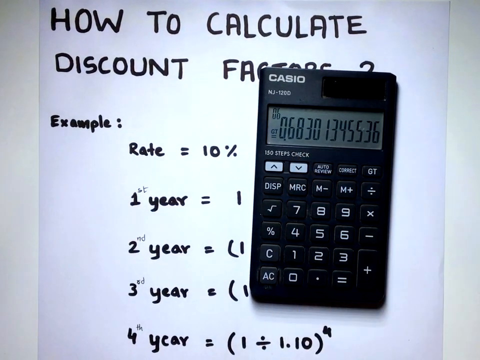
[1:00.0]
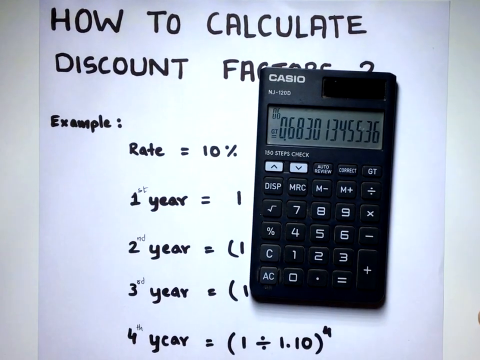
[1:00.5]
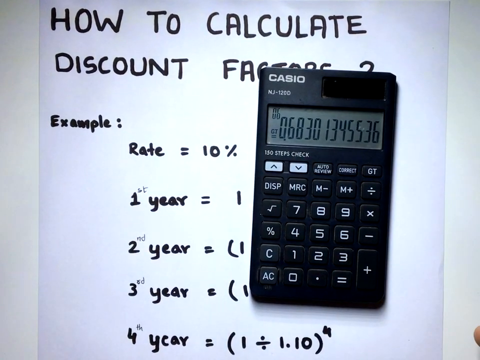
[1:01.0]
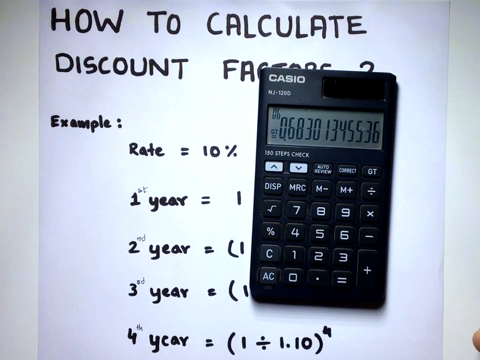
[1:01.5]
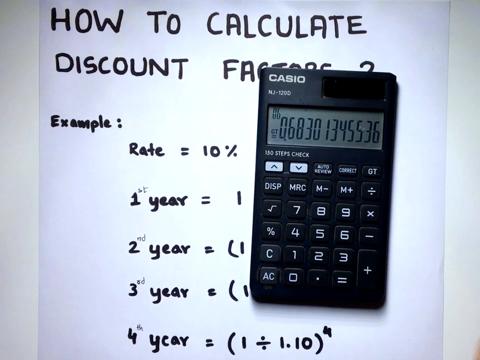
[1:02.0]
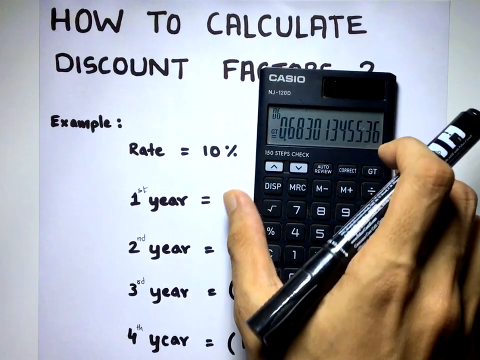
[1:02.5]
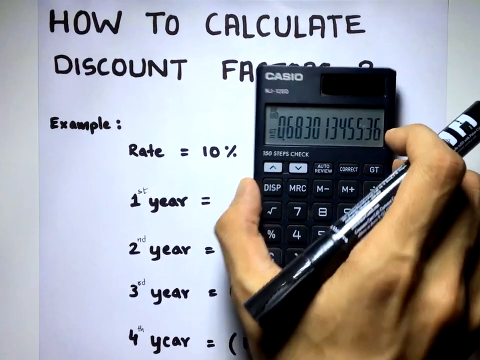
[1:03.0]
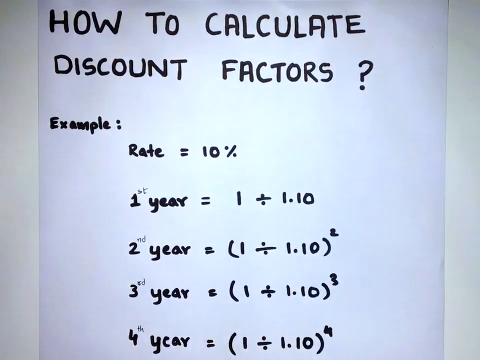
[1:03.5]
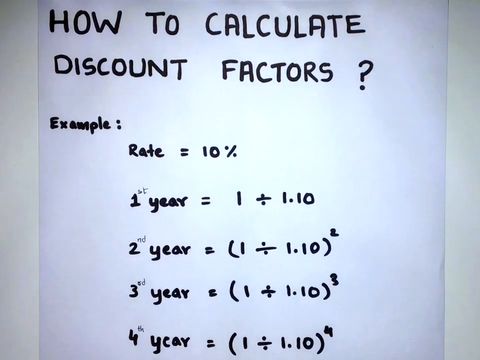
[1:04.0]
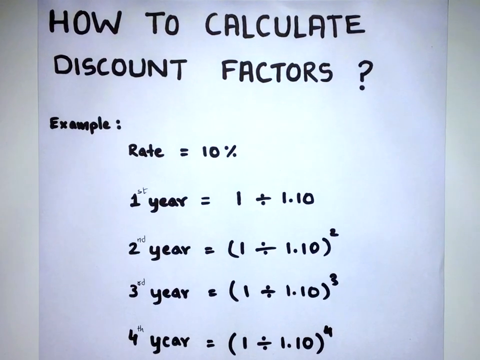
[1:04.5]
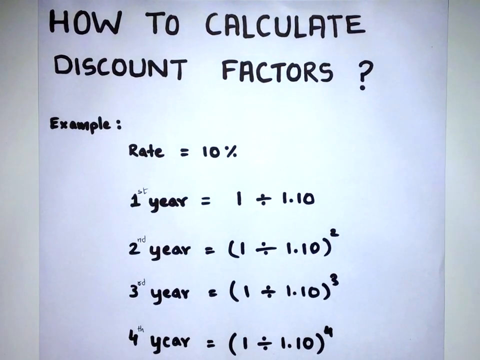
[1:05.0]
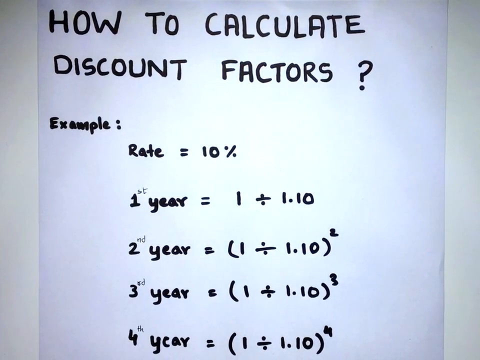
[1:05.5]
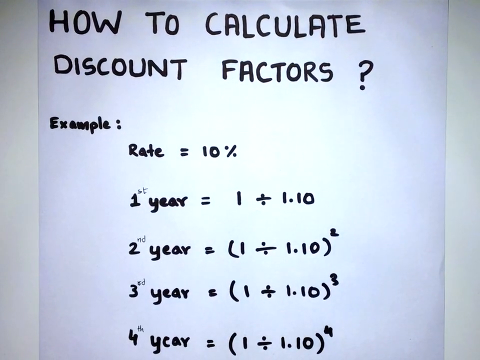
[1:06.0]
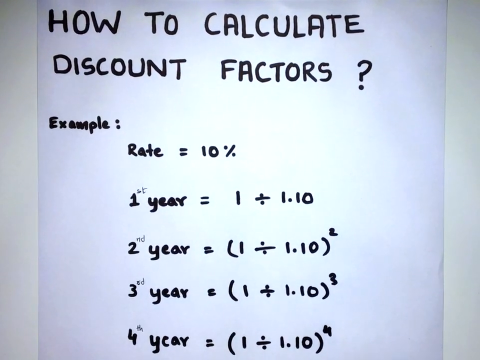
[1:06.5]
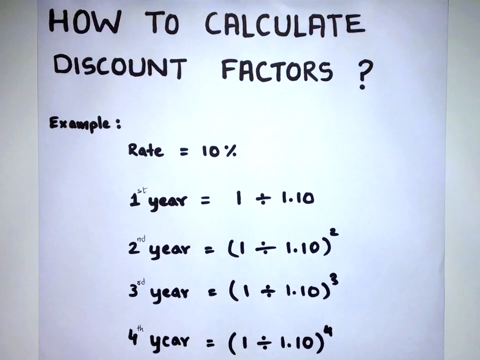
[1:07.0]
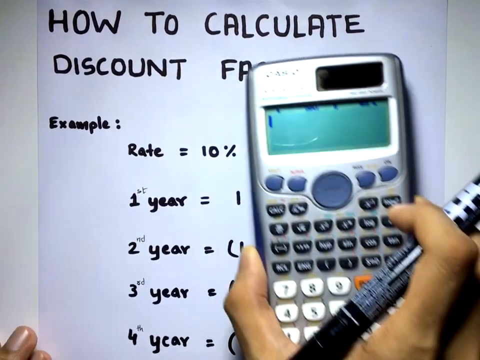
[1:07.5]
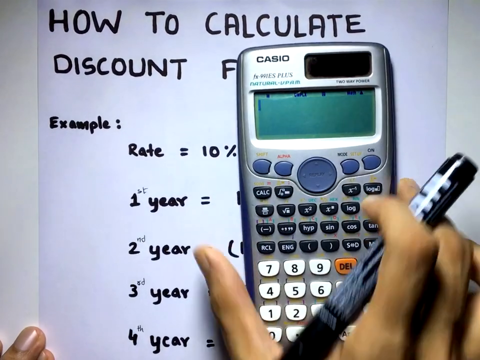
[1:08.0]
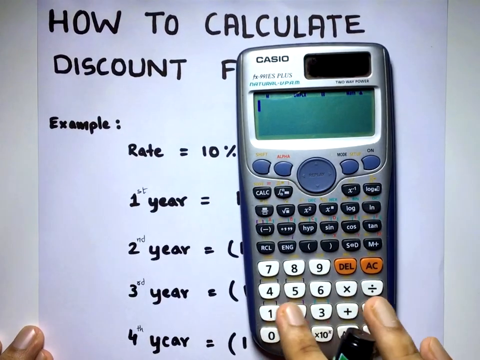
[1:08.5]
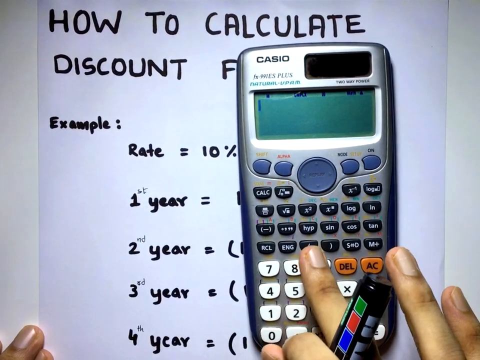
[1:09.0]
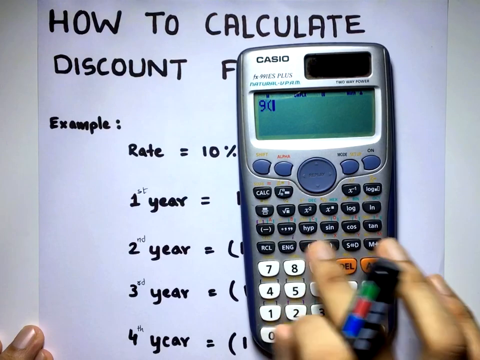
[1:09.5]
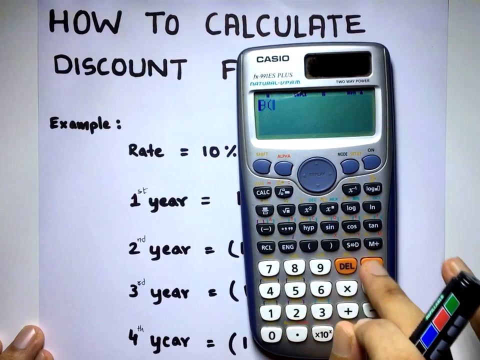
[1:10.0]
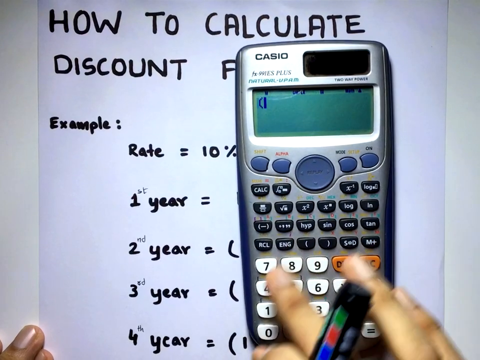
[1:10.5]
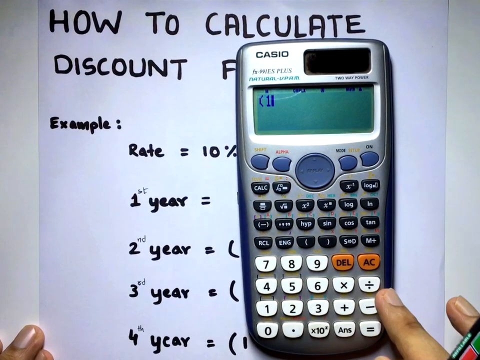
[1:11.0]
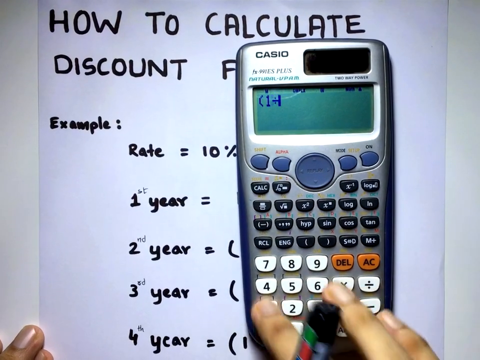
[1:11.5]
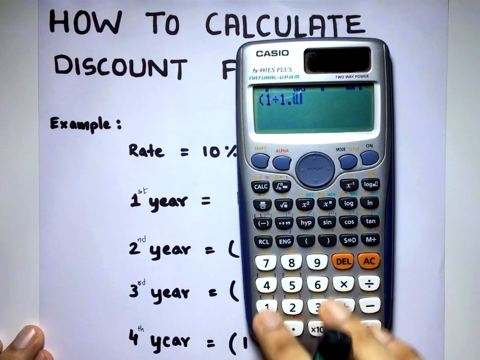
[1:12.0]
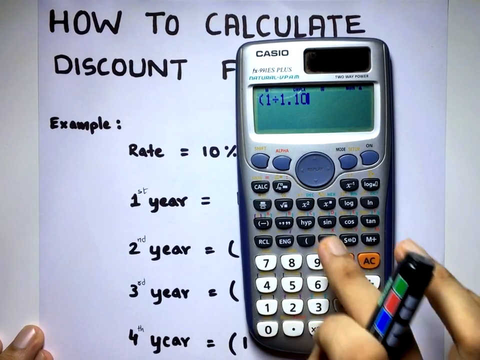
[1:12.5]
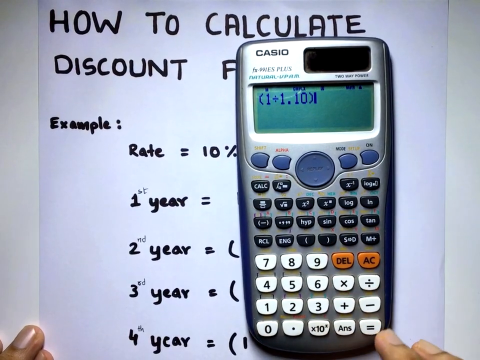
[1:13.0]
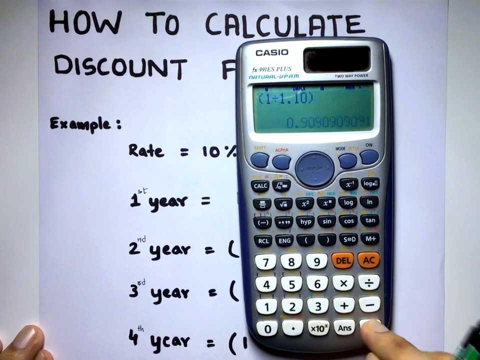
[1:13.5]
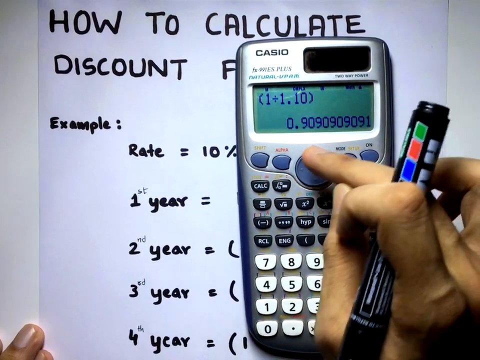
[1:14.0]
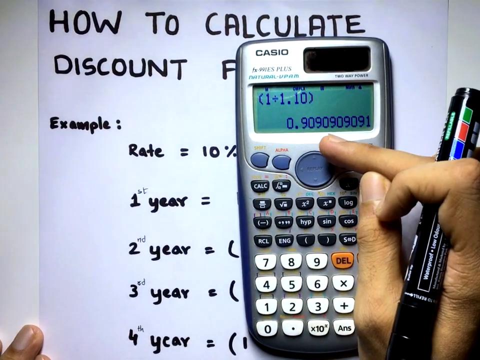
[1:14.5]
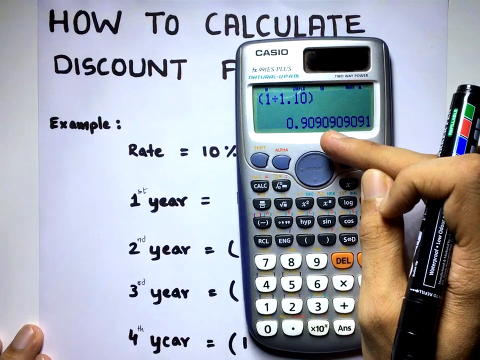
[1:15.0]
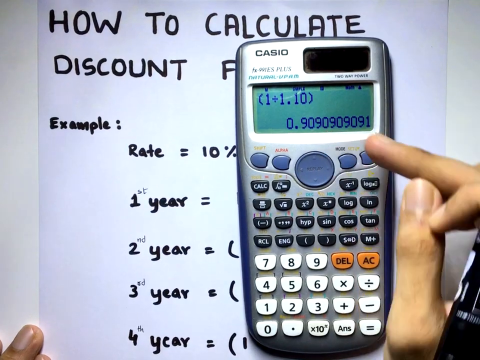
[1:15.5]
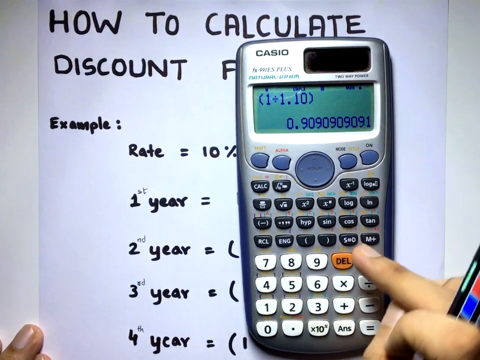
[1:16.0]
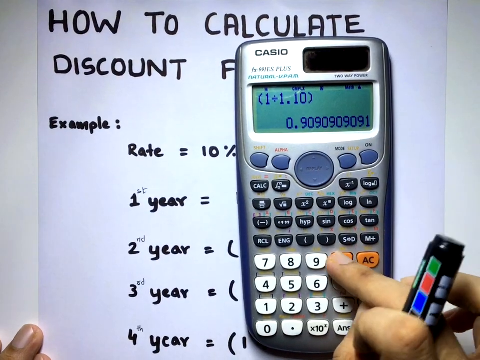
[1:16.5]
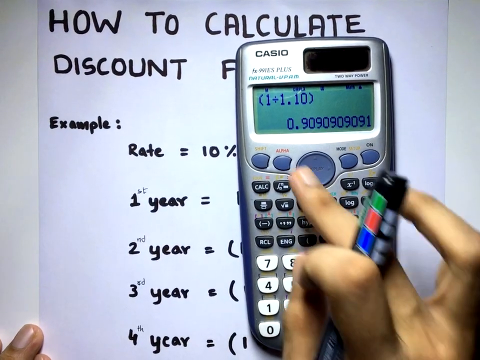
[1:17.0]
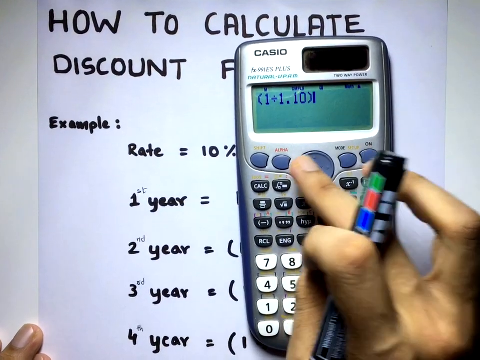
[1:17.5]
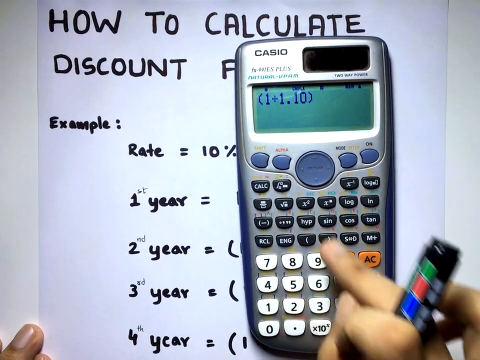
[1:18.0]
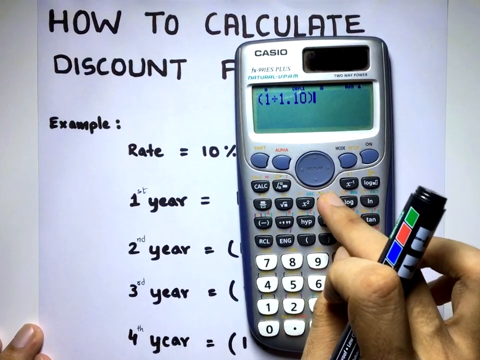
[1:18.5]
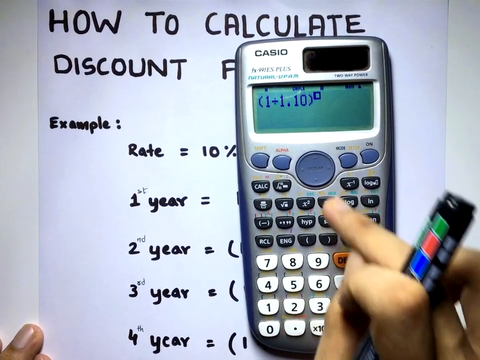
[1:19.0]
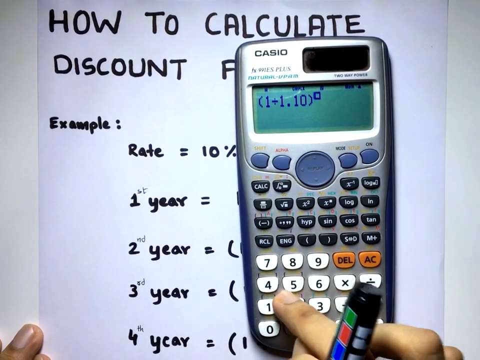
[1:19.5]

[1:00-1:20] The Casio NJ20D calculator is visible. The person leading the lesson picks up the calculator, removing it from the piece of paper, and the rest of the examples become visible. He then brings up a Casio FX99ES Plus calculator and does the same calculation on it, progressively getting the same results as on the first calculator. The NJ20D is a black calculator with black and white buttons. The FX99 Plus is a silver-tone calculator with buttons in various shades of blue, along with white and orange. It has a green screen with blue lettering and appears to be solar powered, with a solar panel on the top.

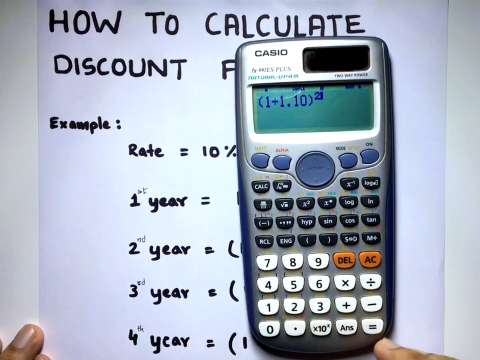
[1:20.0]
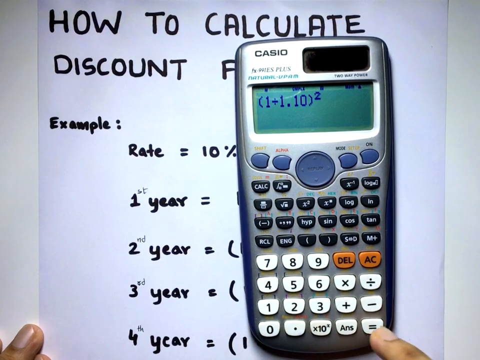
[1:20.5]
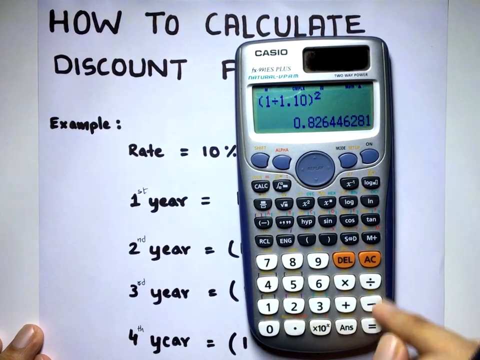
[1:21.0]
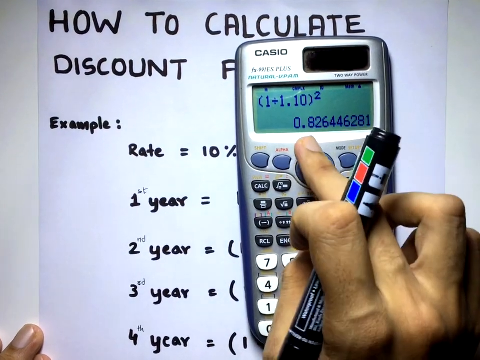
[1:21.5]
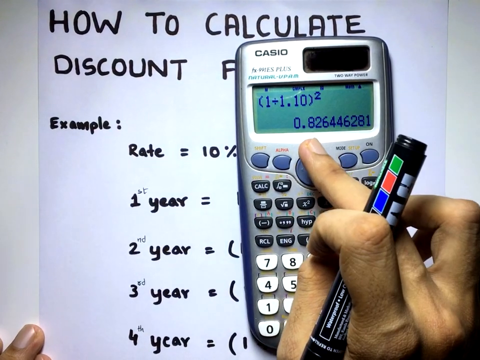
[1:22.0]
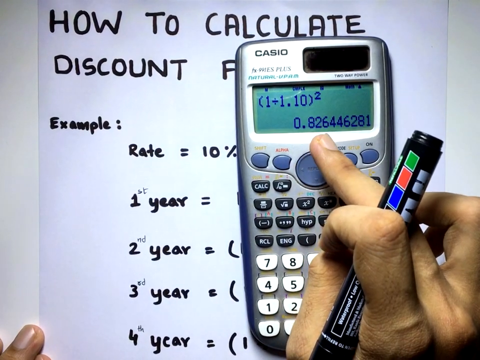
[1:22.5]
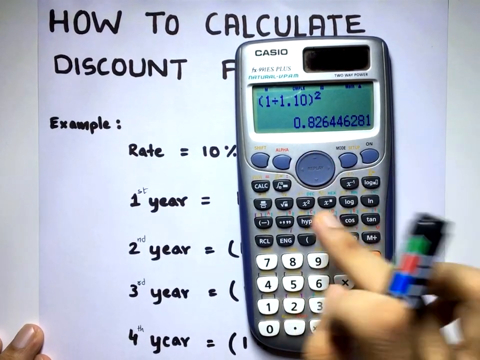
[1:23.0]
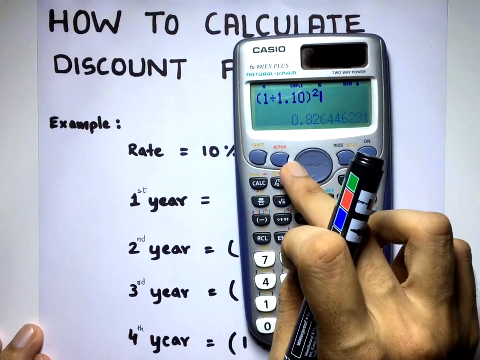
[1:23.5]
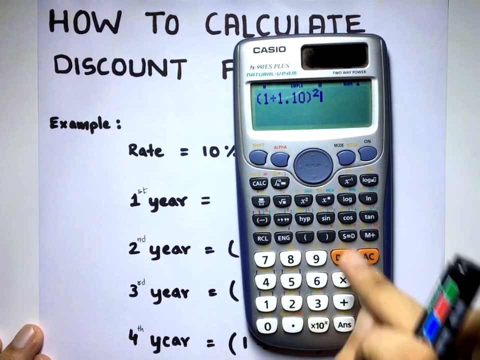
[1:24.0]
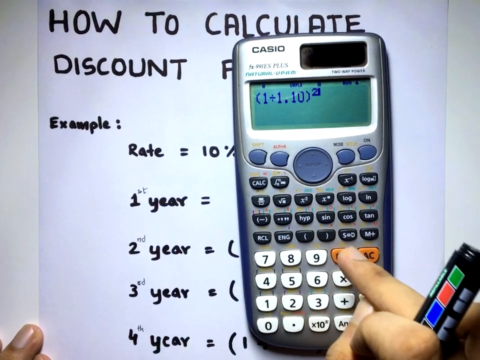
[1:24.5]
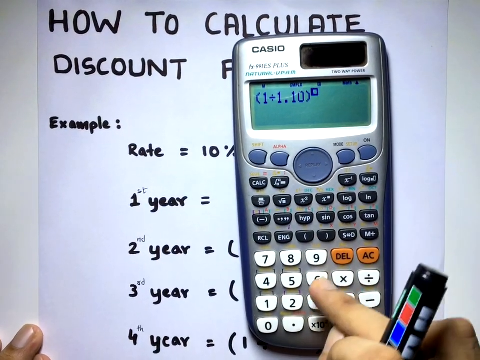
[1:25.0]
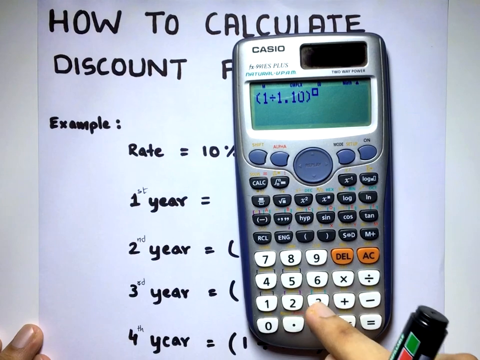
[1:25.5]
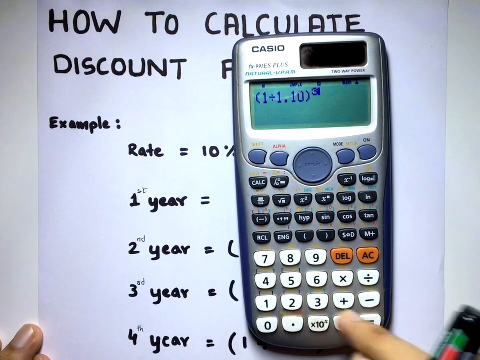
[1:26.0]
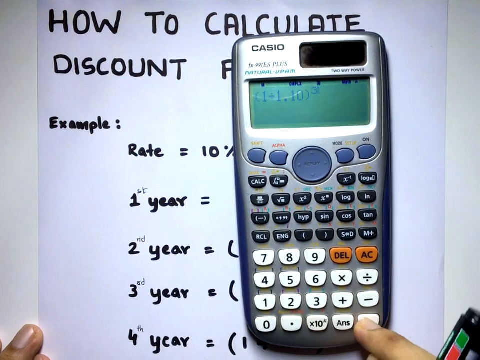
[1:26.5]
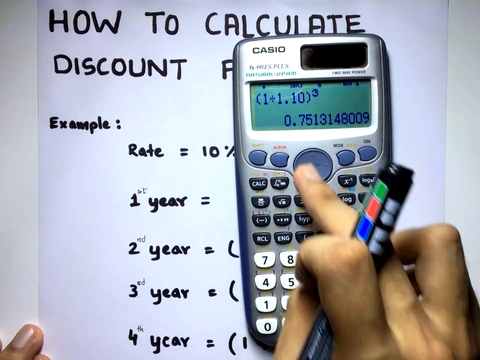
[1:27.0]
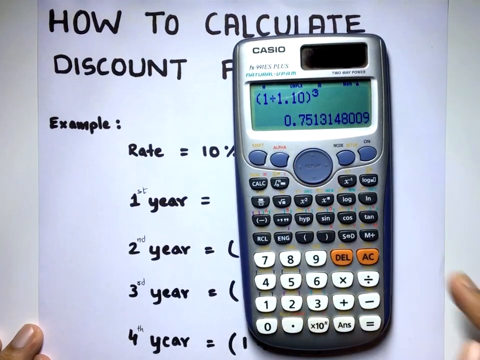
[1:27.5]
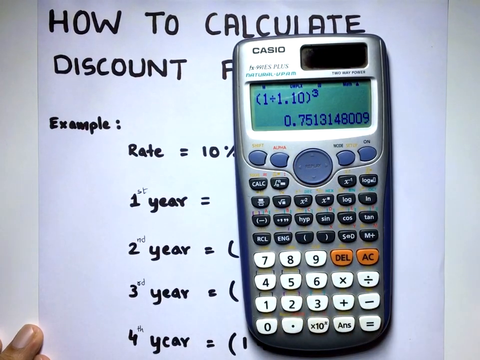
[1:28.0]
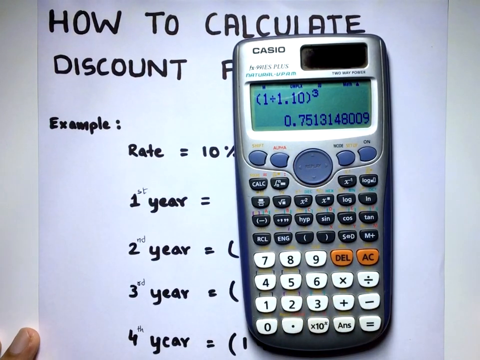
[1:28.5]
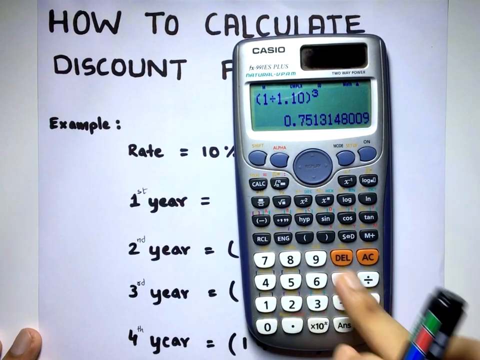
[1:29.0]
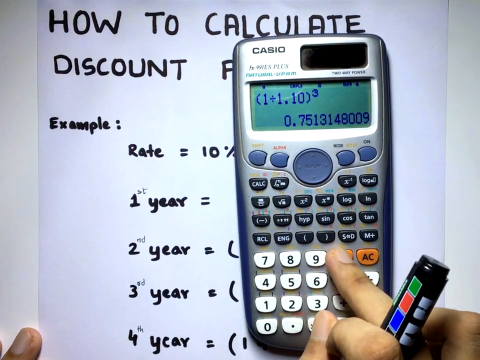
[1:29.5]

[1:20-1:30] The hand of the person leading the lesson replaces the multiplication number on the right-hand side of the equation, changing it from 2 to 3 to indicate three years of the discount rate being applied. He presses equal, and the calculation gives 0.751, as it did on the first calculator. He then presses delete. He enters the numbers and symbols with his middle finger, because his index finger and thumb are still holding the black pen, which he presumably used to write the calculation and information on the piece of paper behind him.